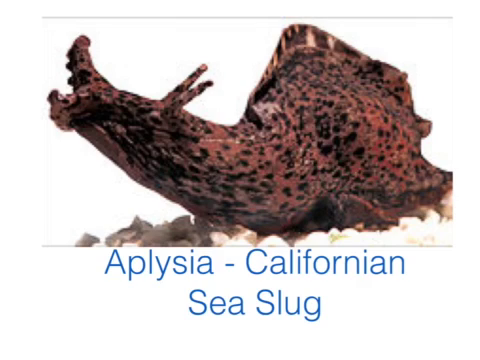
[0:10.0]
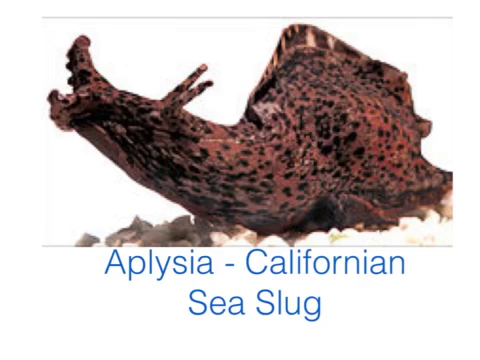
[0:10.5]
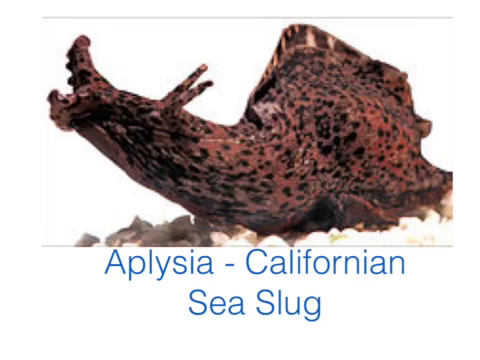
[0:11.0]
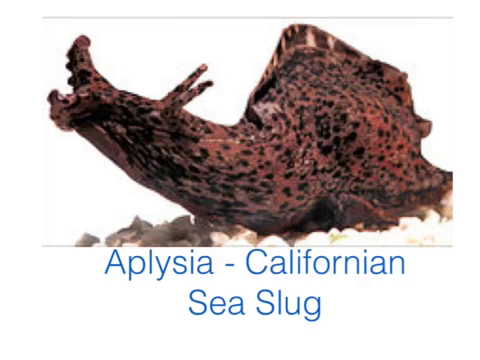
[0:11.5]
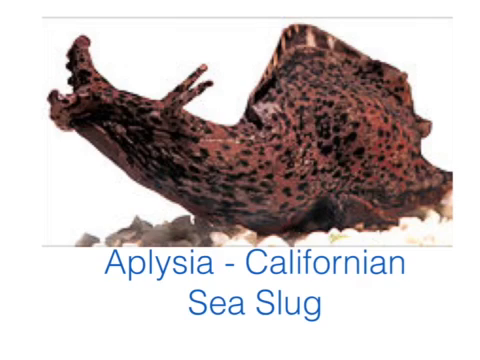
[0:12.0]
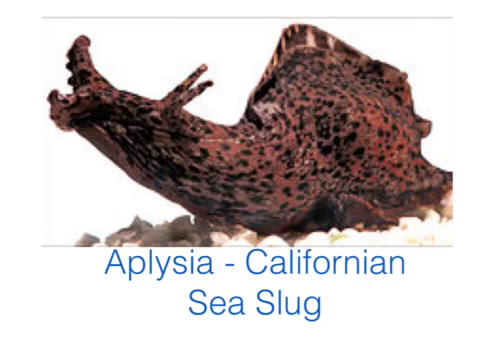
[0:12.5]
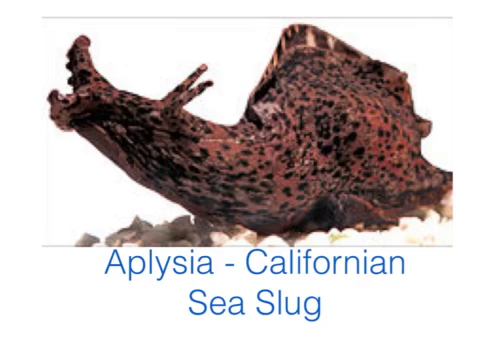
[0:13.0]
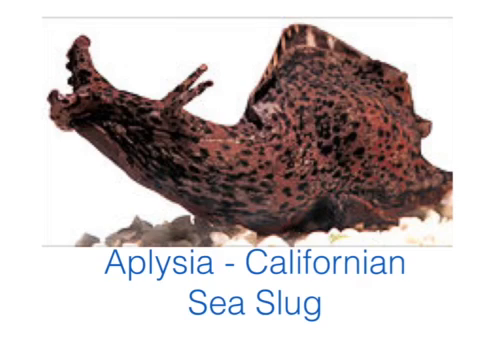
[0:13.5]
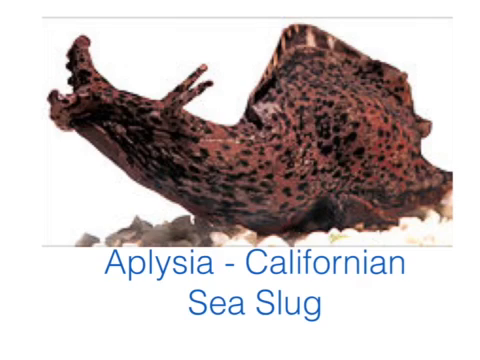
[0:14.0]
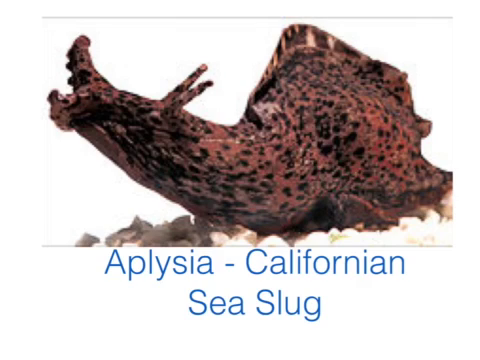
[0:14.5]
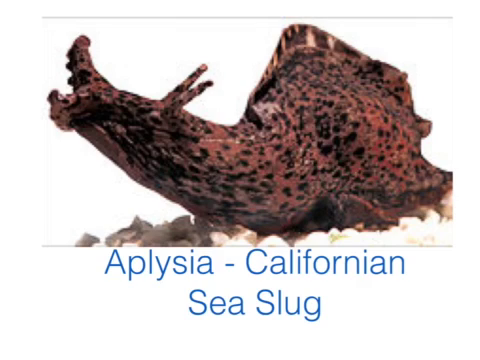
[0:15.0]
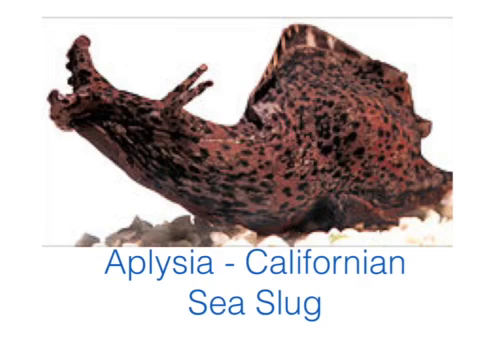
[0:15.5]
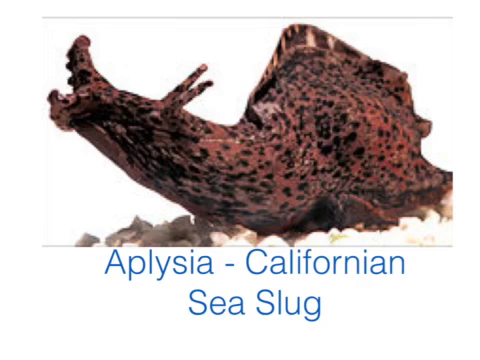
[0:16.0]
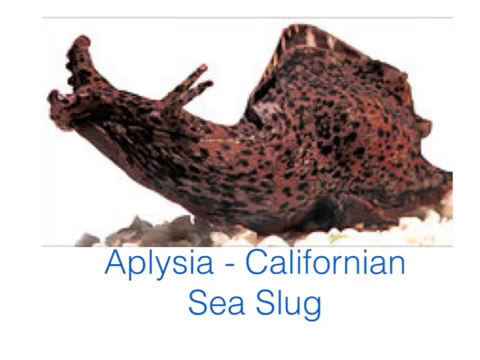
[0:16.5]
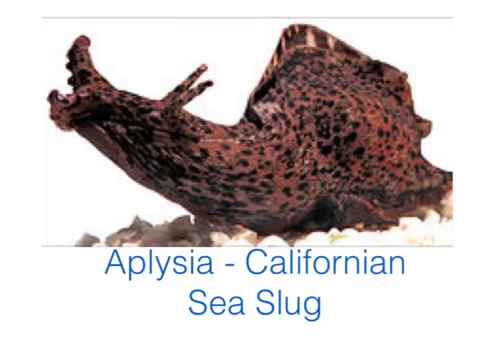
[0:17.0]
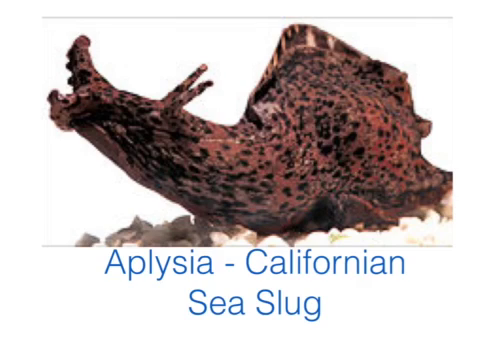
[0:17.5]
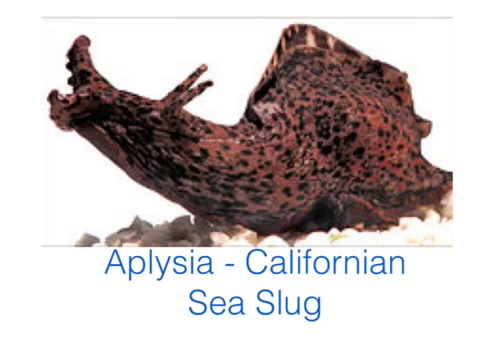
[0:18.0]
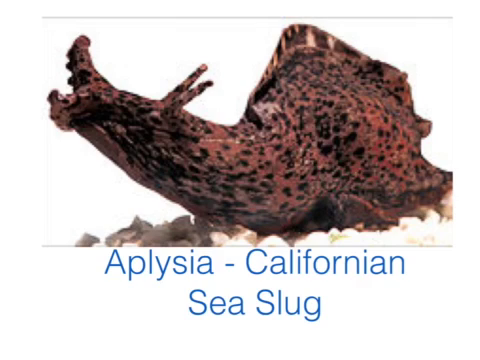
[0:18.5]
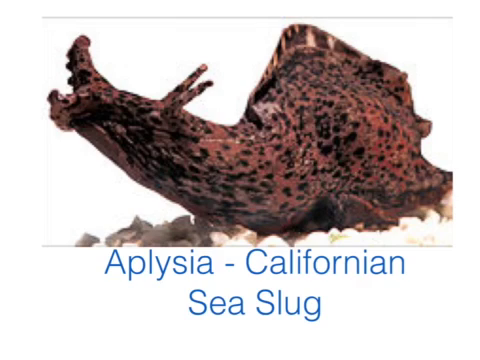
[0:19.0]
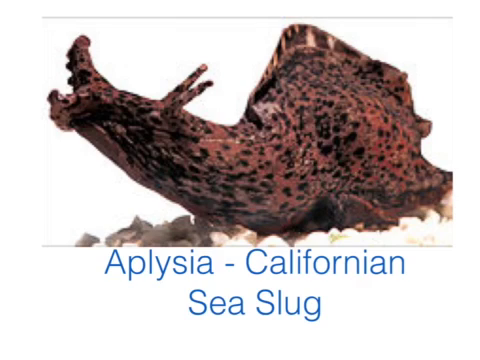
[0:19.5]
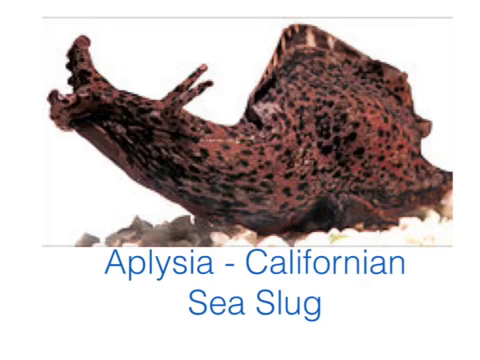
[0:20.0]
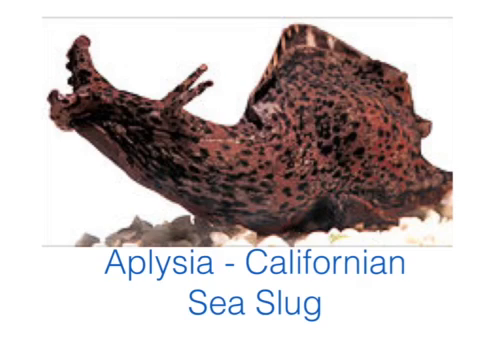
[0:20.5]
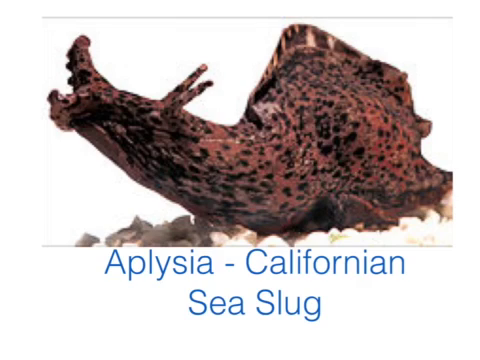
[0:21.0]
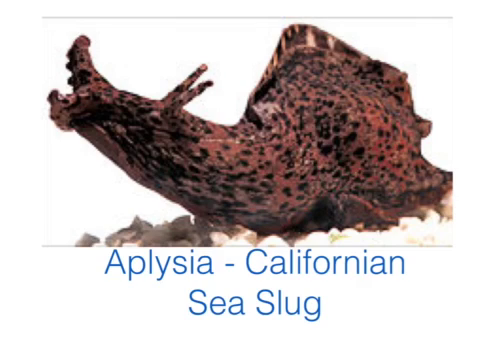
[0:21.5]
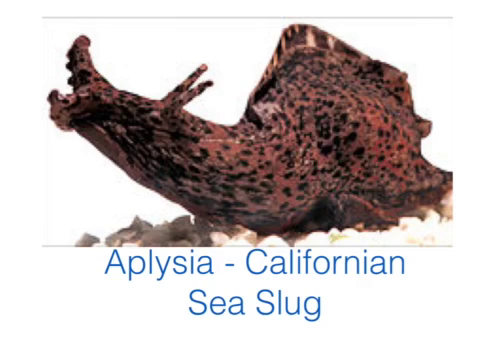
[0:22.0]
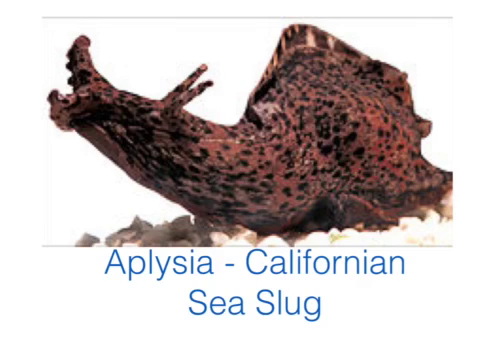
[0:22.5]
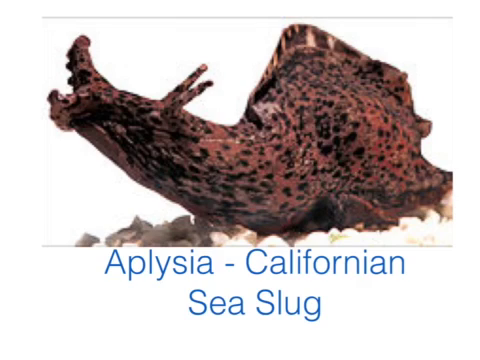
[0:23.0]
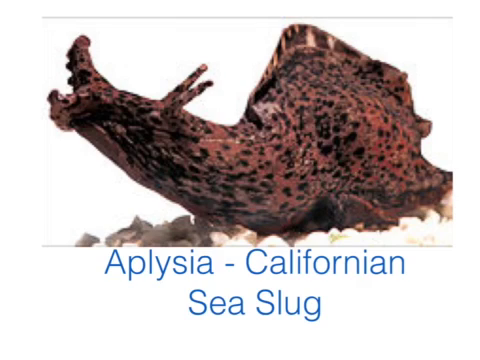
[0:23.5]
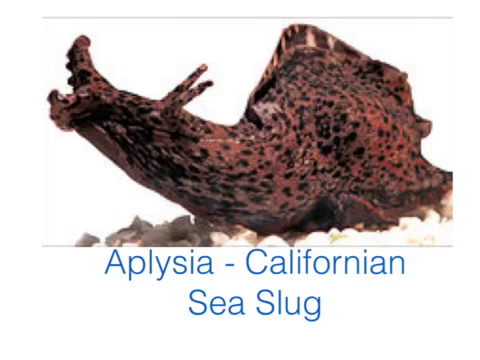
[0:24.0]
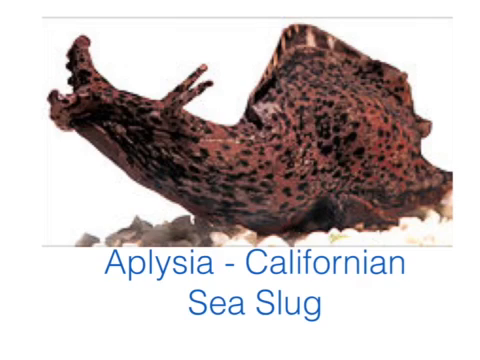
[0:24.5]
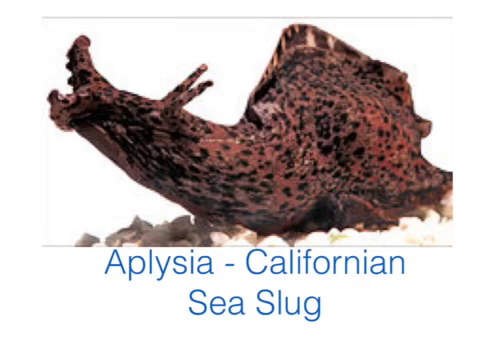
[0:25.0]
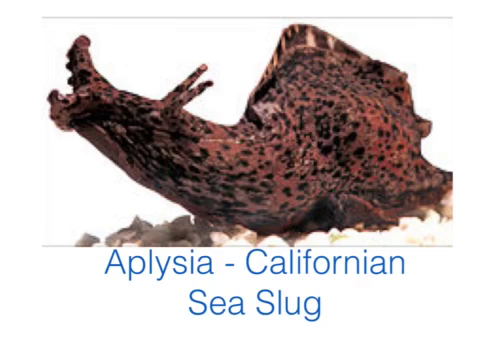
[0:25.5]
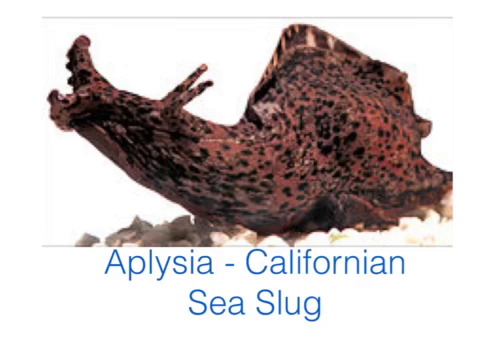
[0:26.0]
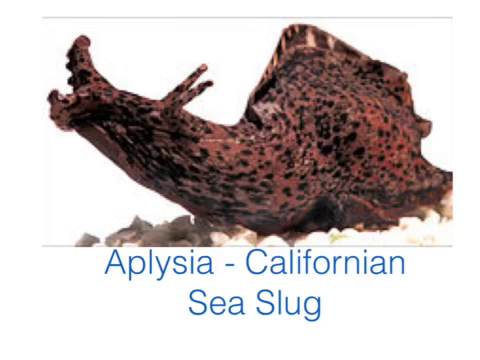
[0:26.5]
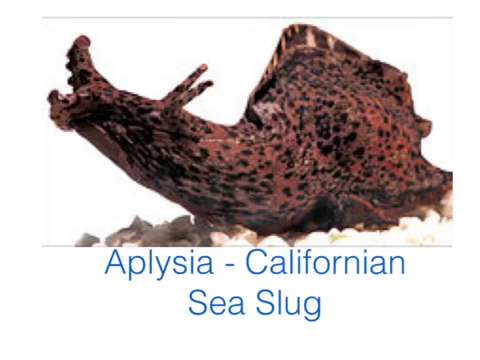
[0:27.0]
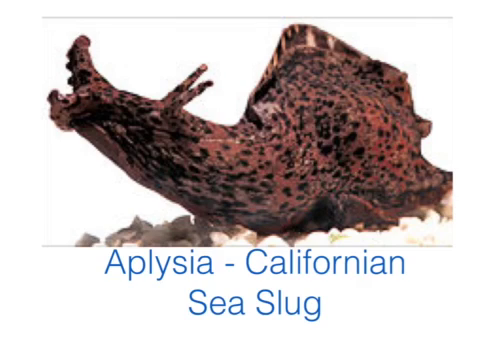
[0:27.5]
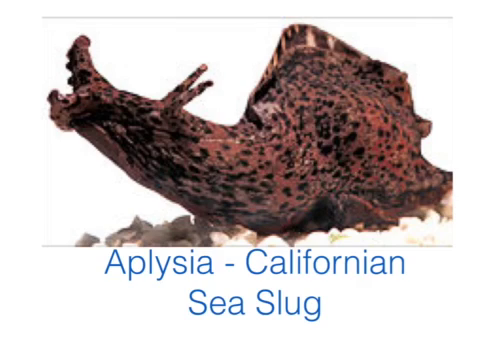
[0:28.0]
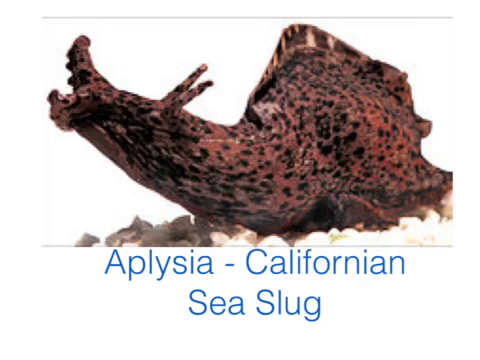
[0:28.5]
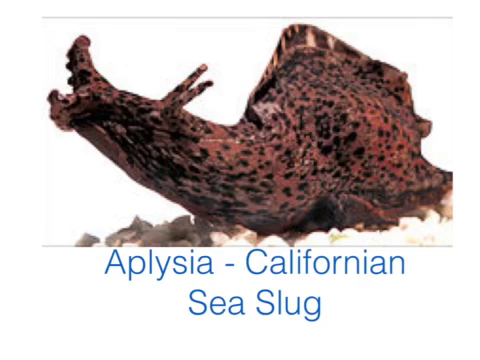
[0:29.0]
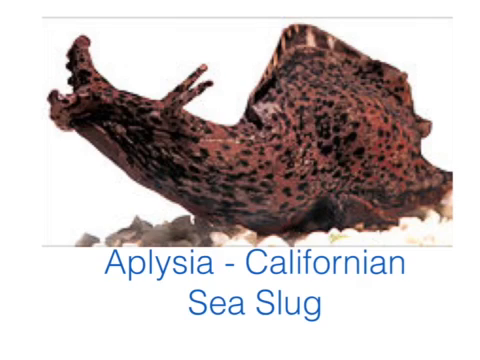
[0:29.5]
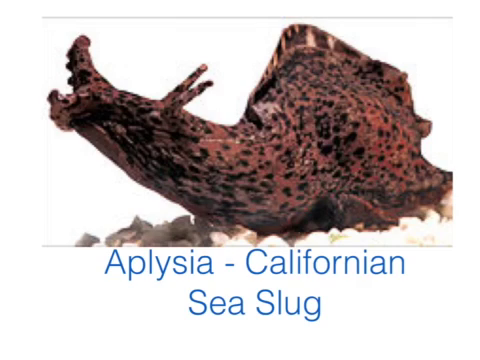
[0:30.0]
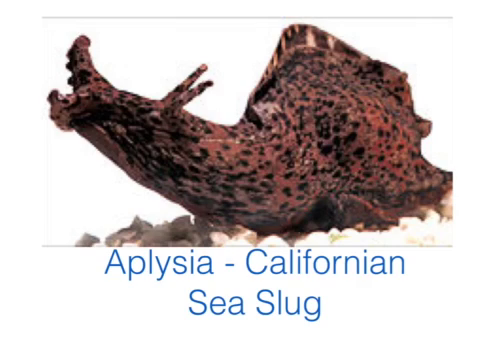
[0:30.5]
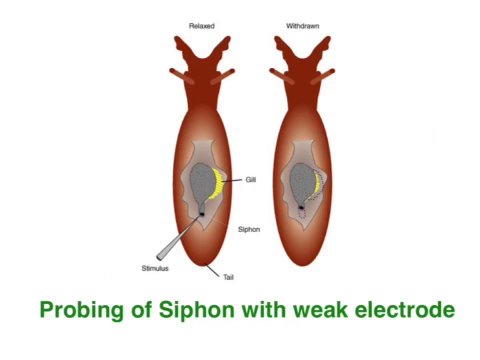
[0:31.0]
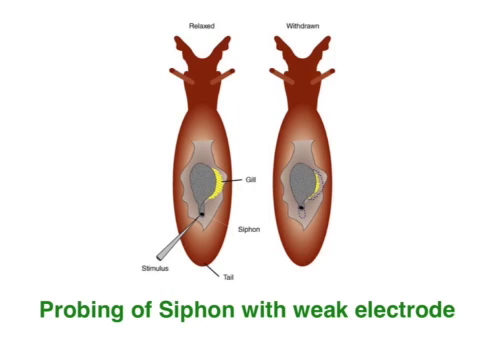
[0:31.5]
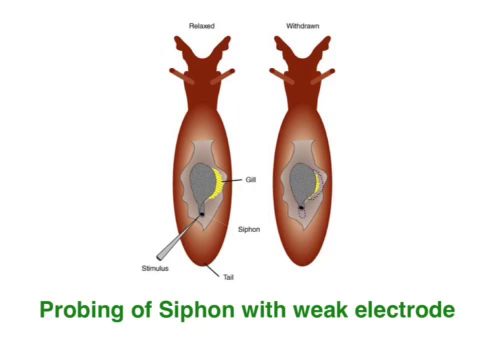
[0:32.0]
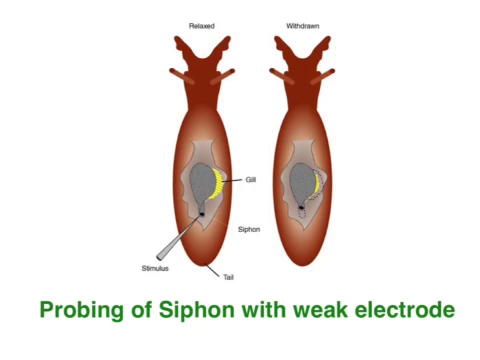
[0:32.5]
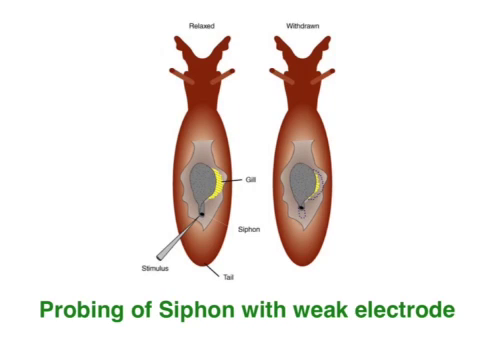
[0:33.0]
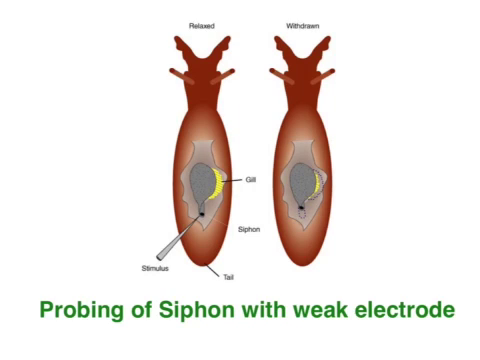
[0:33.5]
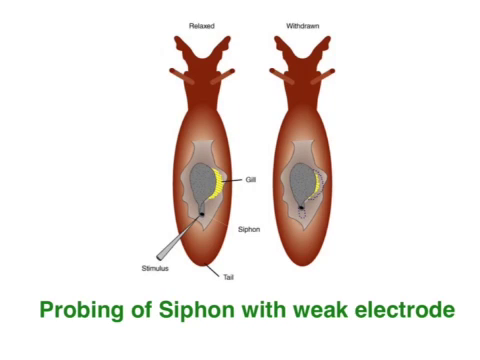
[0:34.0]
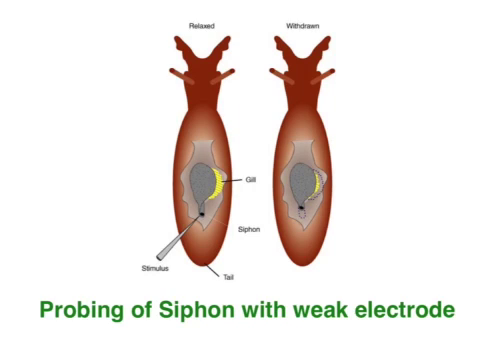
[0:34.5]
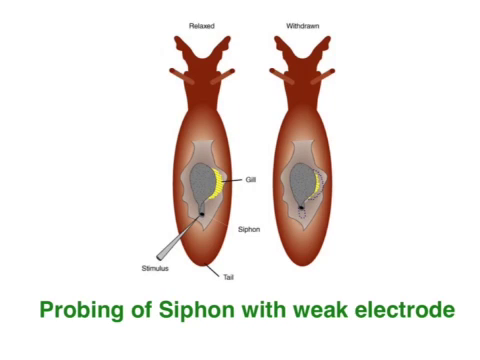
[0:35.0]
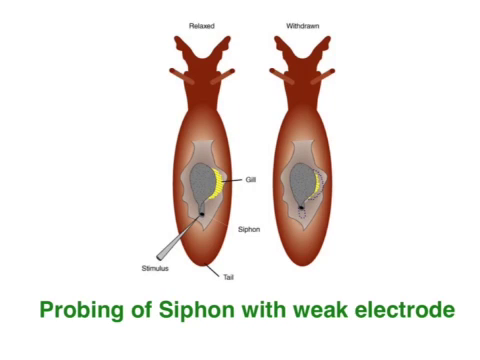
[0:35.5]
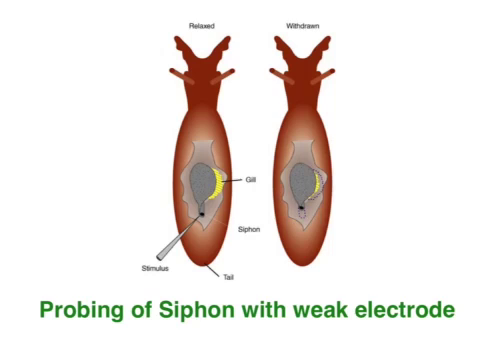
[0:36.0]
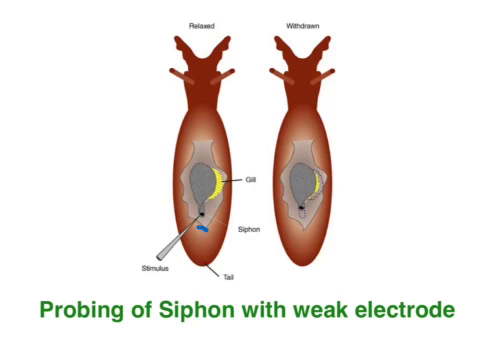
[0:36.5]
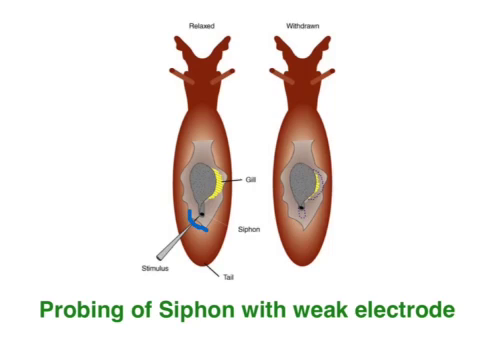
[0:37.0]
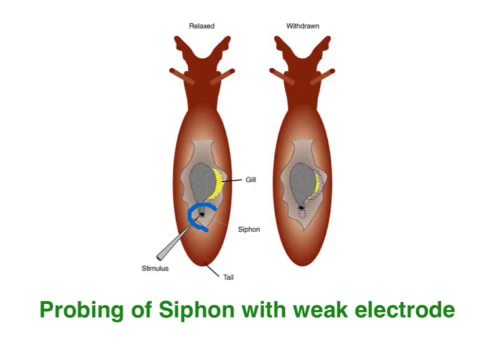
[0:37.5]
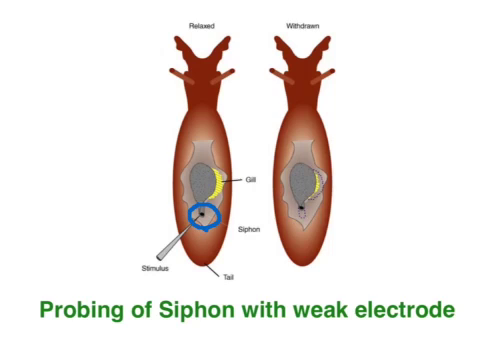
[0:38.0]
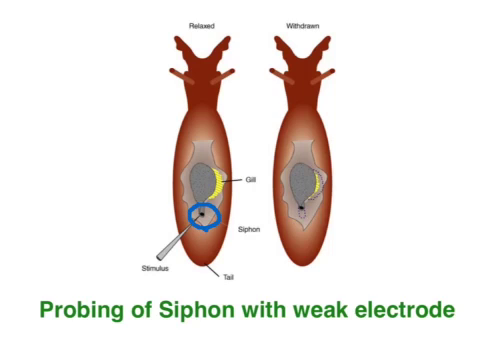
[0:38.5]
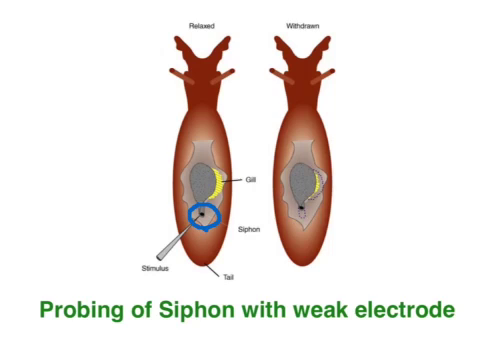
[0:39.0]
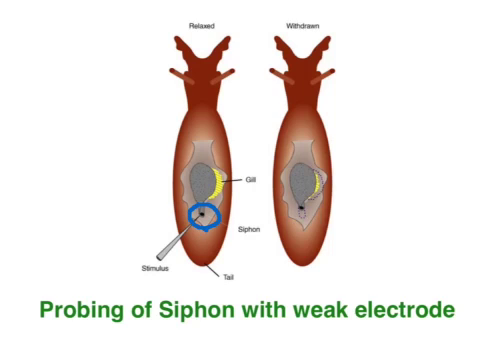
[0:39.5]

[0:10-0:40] An image of Aplysia, the Californian sea slug, fills the top half of the screen horizontally, with the title below in blue. The slug has a brown body with black spots. Its face points to the left and its head appears to be raised; its mouth and two antennae are visible, and its back looks like it has a spike along it. It rests on a bed of what looks like white crushed gravel against a white background. The image stays on screen for a long time. Next comes an illustration of two sea slugs seen from above, labeled "relaxed" on the left and "withdrawn" on the right. The left image also has labels naming parts of the body: "gill," "tail" and "siphon." The text reads "Probing of Siphon with weak electrode," and "stimulus" is labeled on the left drawing.